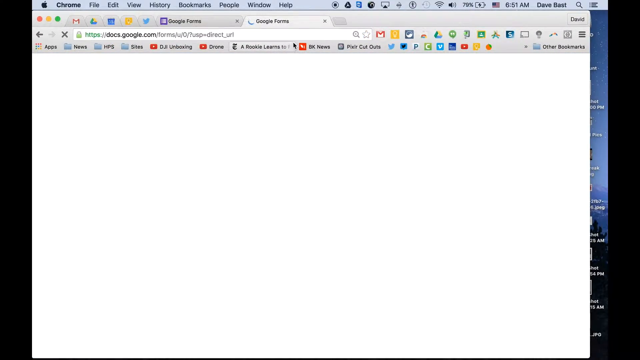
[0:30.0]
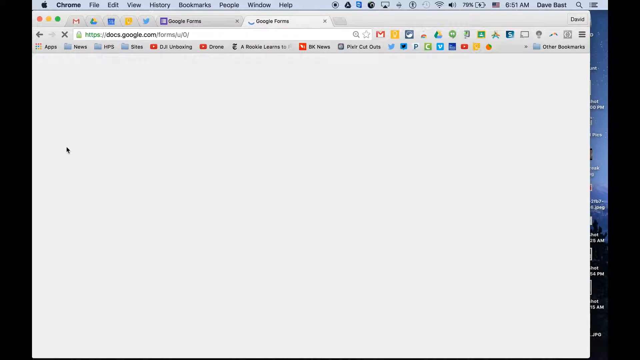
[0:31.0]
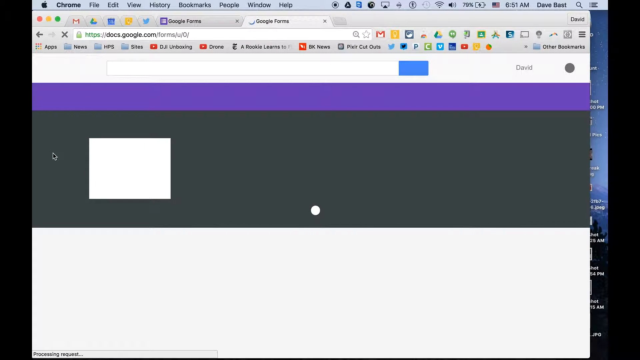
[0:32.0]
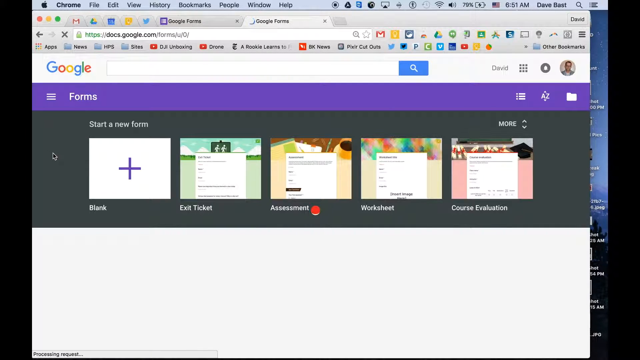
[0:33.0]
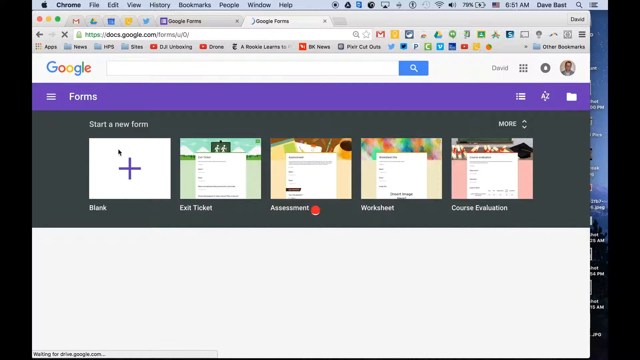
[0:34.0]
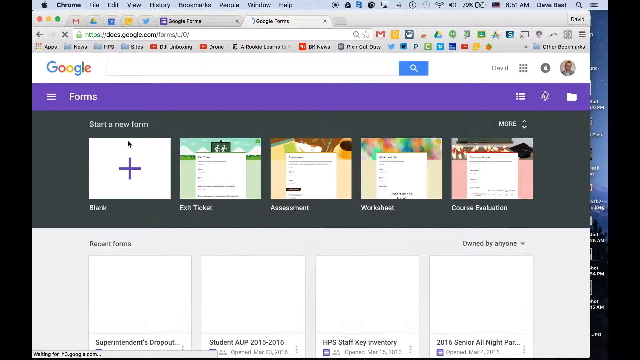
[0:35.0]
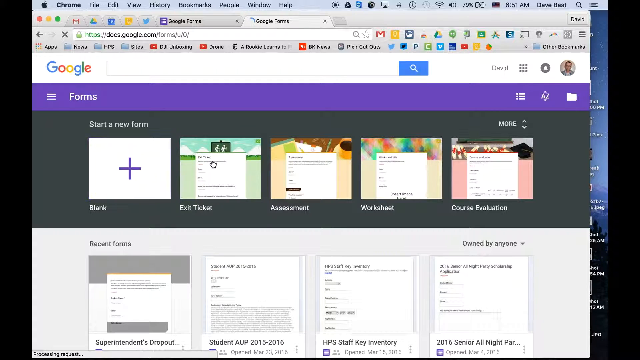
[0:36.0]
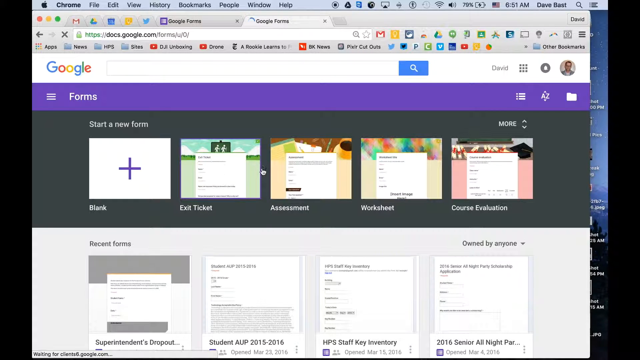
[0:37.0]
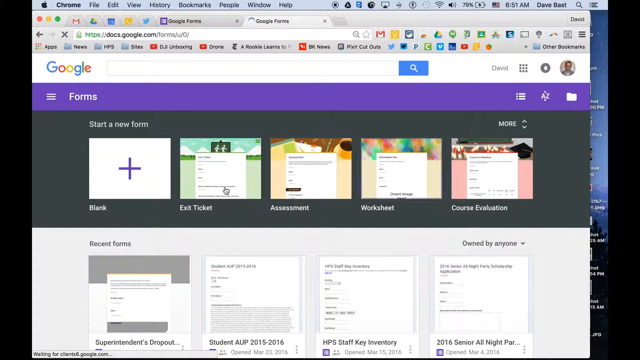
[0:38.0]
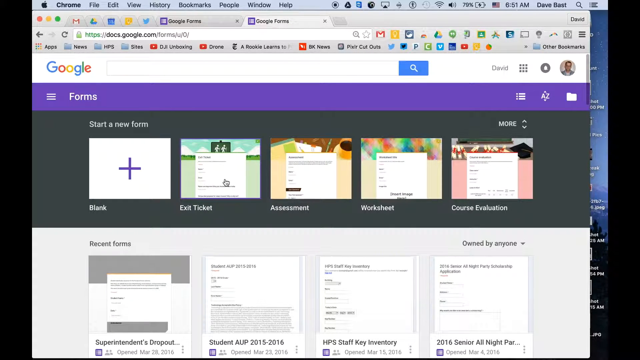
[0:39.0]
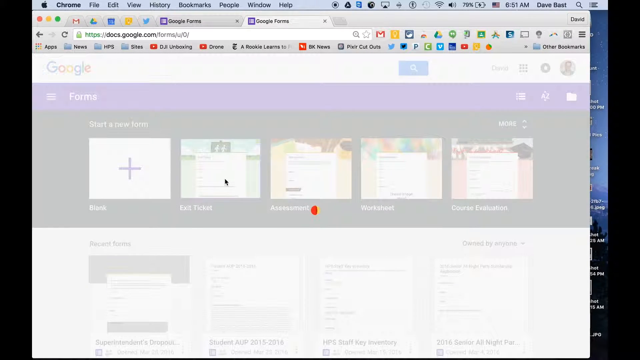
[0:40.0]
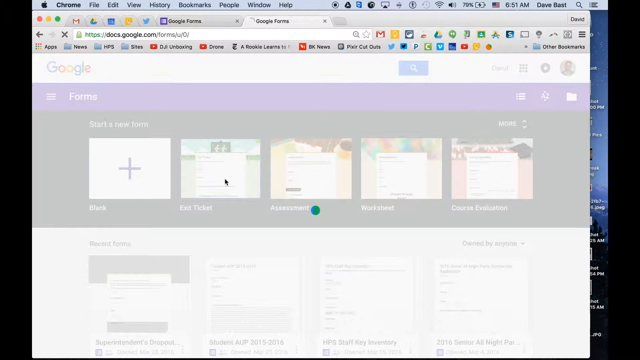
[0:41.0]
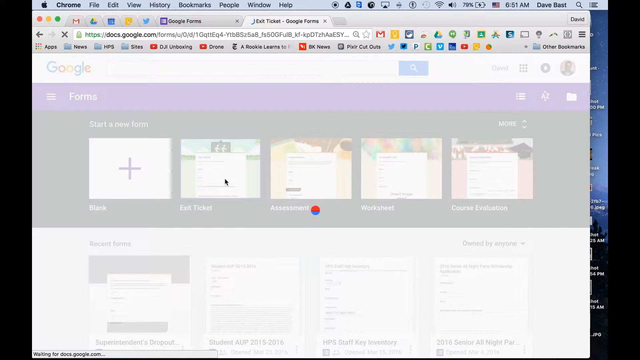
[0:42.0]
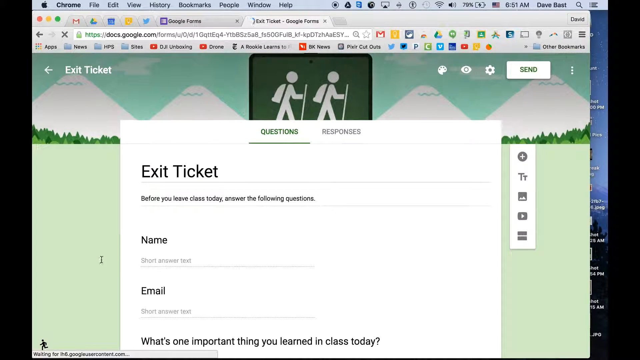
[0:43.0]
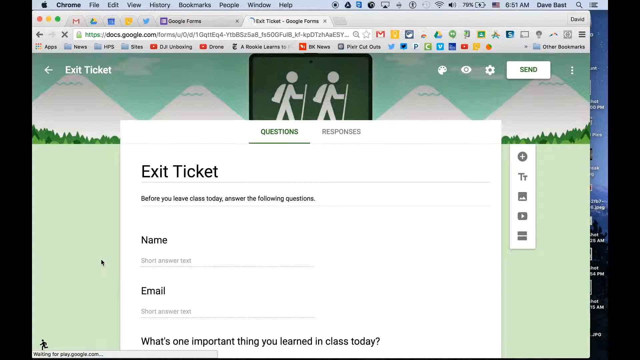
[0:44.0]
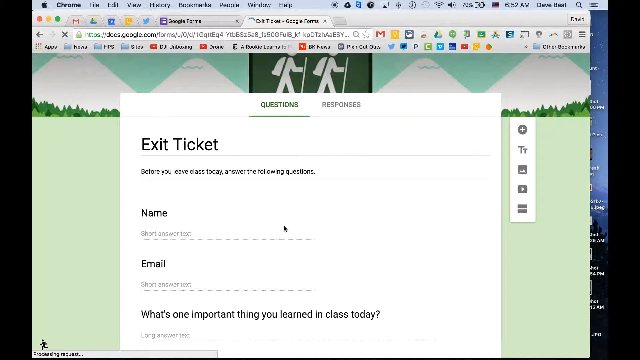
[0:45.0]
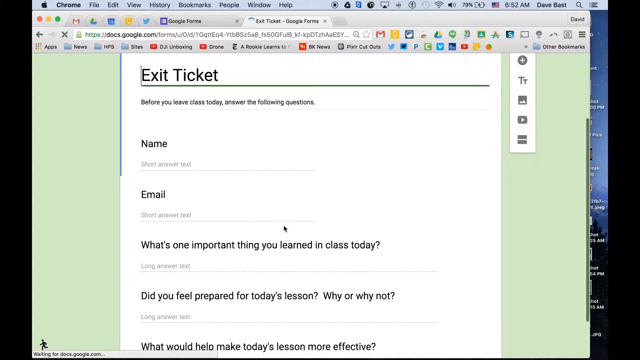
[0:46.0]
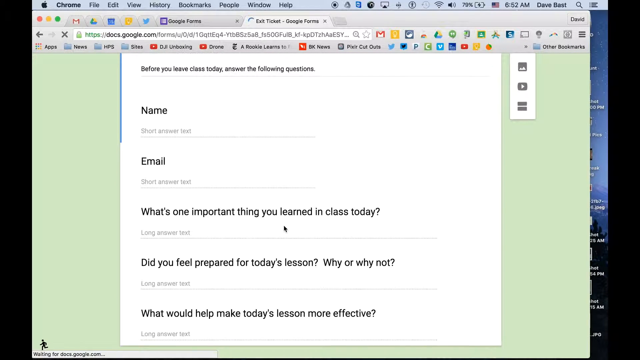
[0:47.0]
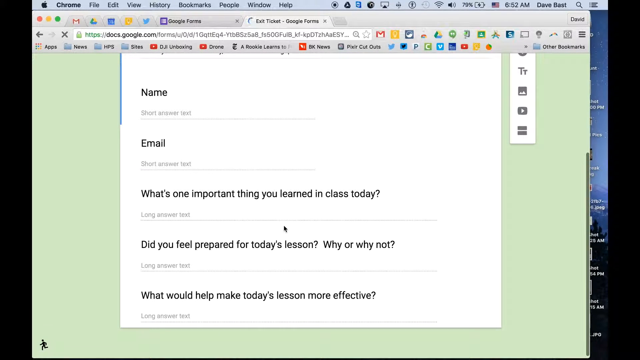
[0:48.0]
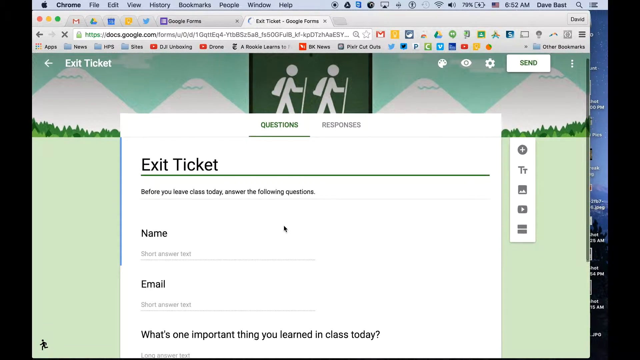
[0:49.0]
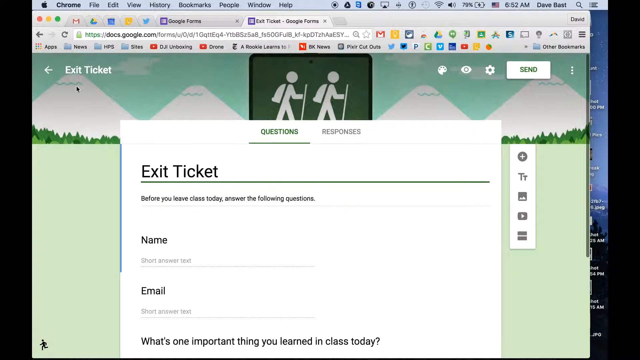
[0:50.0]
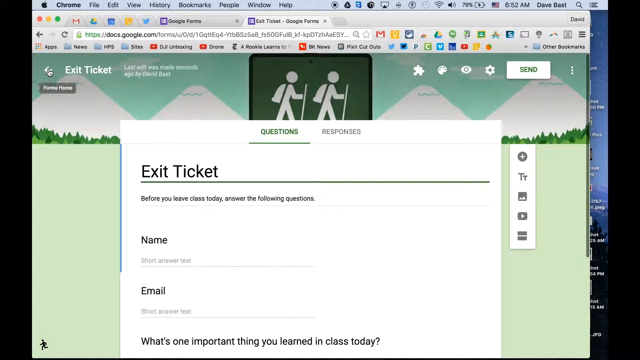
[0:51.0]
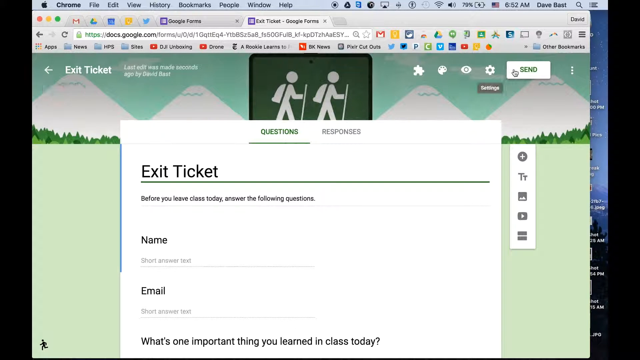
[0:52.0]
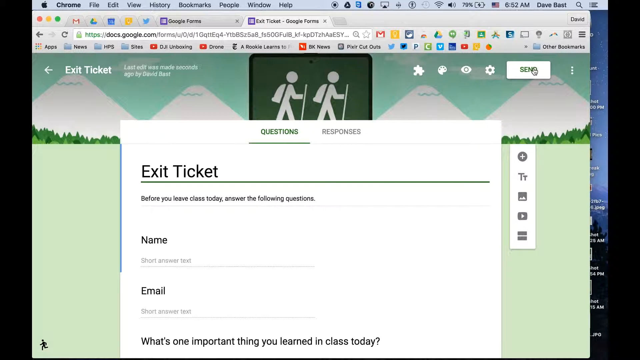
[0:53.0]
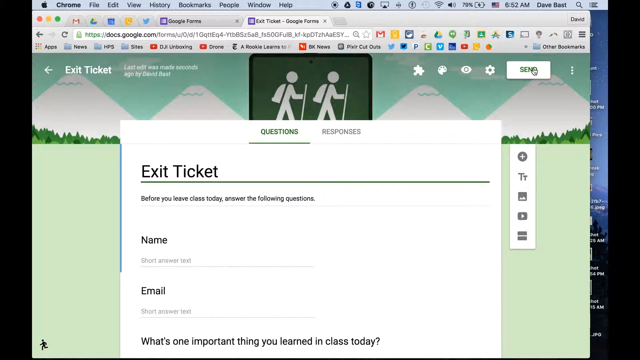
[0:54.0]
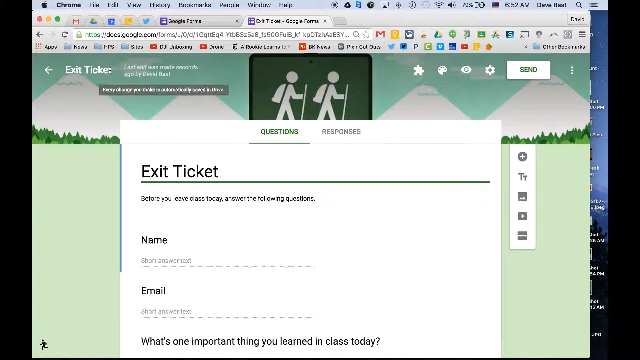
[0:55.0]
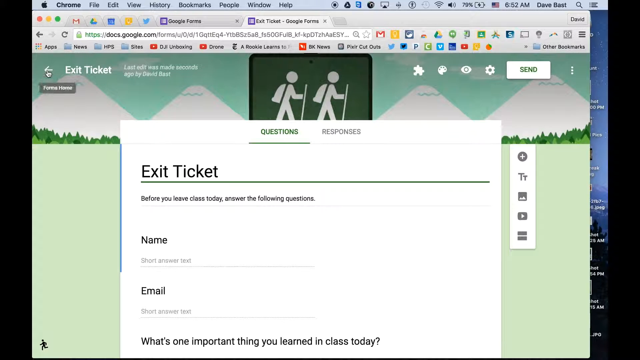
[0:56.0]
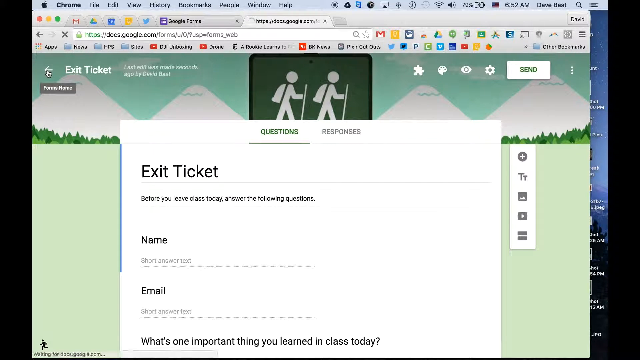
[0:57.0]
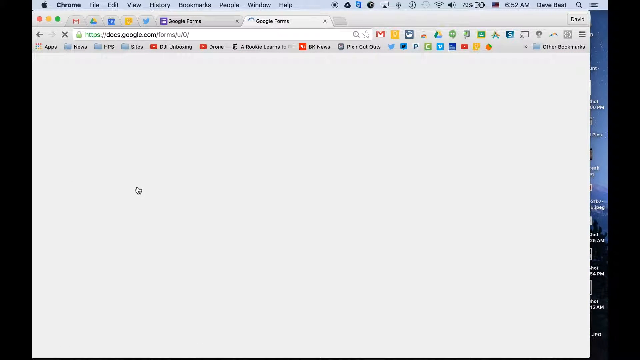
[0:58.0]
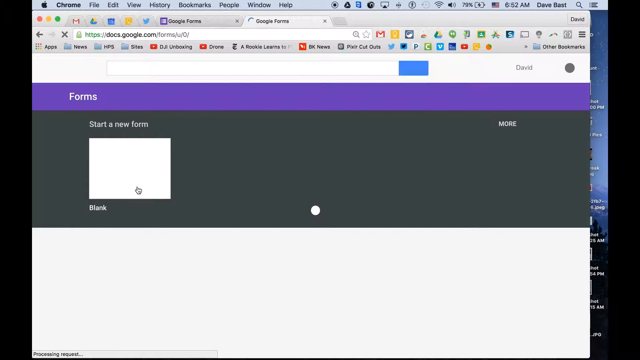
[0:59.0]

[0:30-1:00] A Google Forms webpage loads. The person goes to the center of the page, where there are templates for starting new forms, and from a few options chooses the exit ticket form. At the very top of the exit ticket form is an image of two people hiking, drawn as stick figures, with mountains with greenery, like grass and hills, to their left. Behind that is a light green background and a form with questions and responses. The presenter slowly scrolls down the page, showing what the form looks like: the template has "name", "email" and "What's one important thing you learned in class today?" They highlight over the blank. There is also a response section, and further down are the questions "Do you feel prepared for today's lesson? Why or why not? What would make it more effective?" It appears to be a demonstration, possibly by a professor for other teachers, of how to create Google Forms for collecting feedback from students.